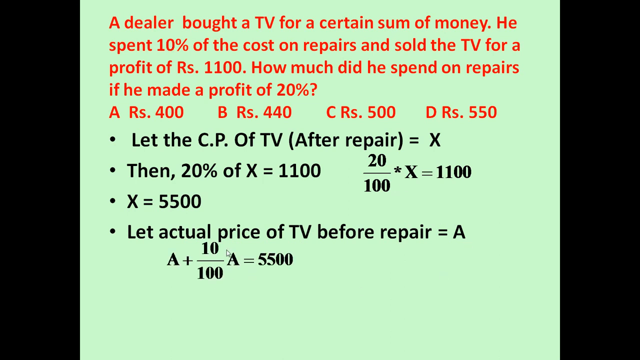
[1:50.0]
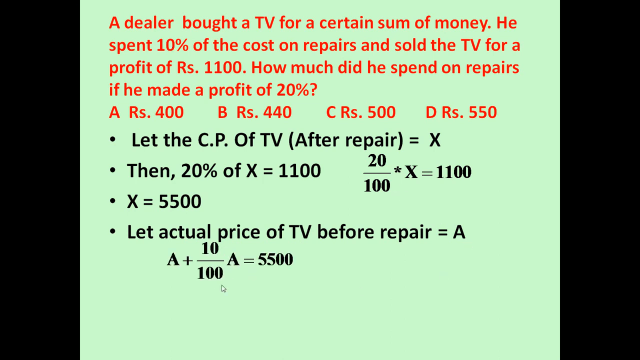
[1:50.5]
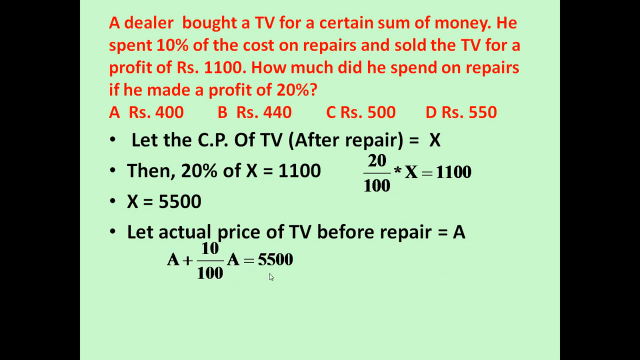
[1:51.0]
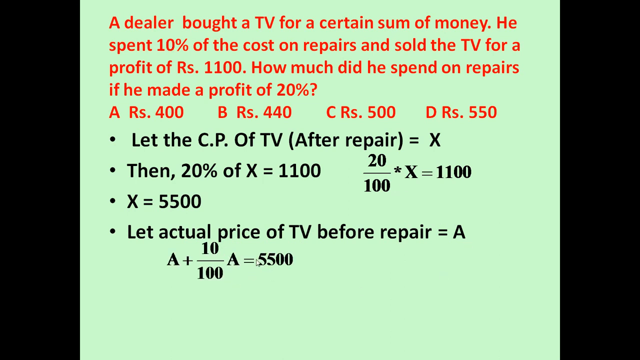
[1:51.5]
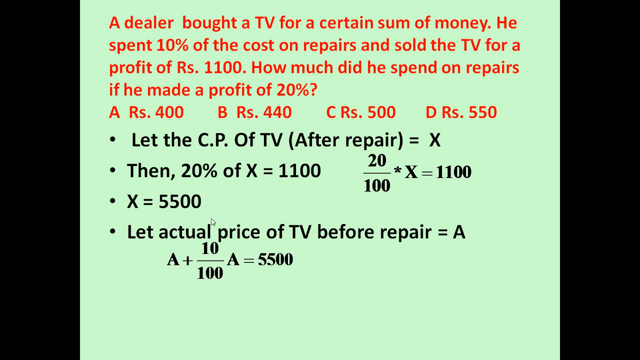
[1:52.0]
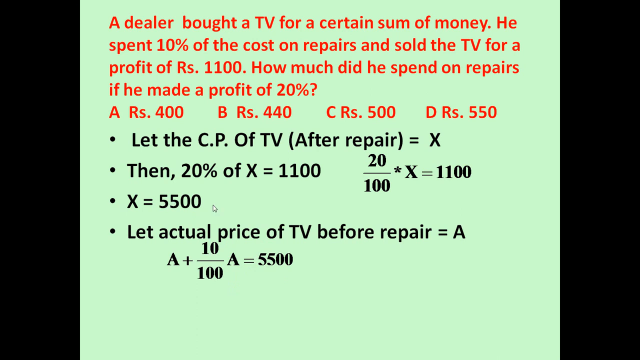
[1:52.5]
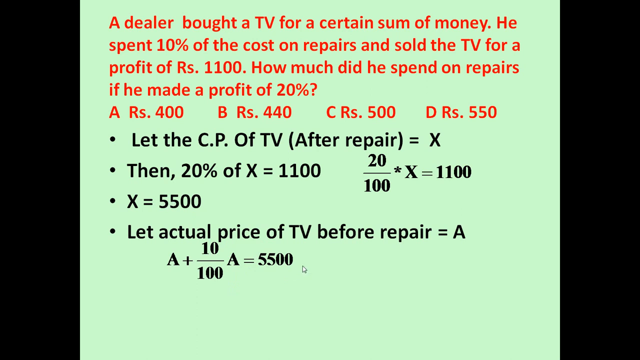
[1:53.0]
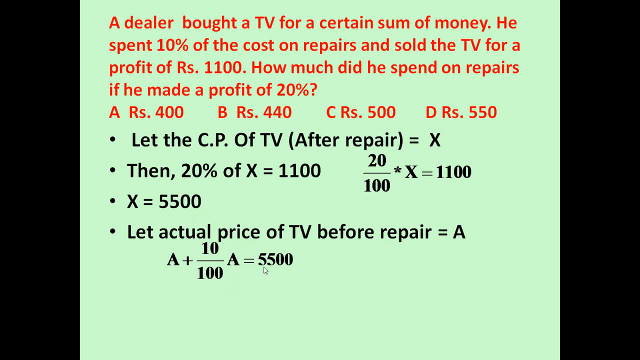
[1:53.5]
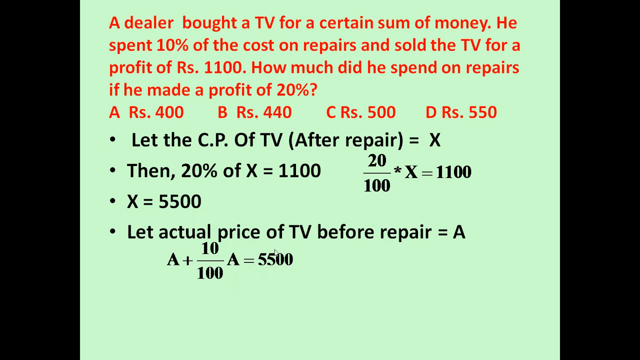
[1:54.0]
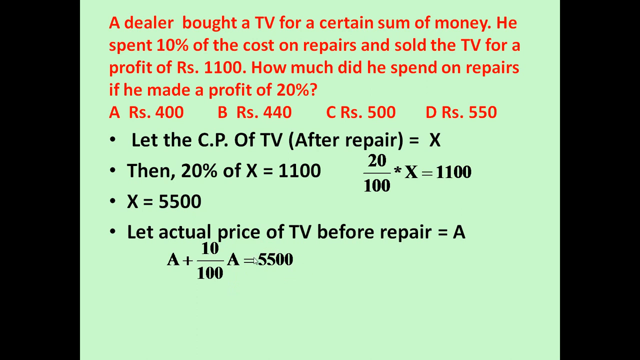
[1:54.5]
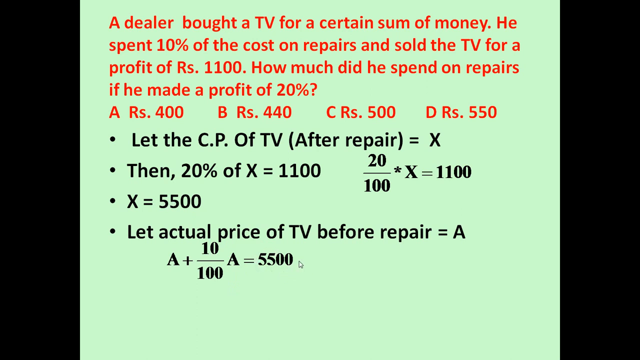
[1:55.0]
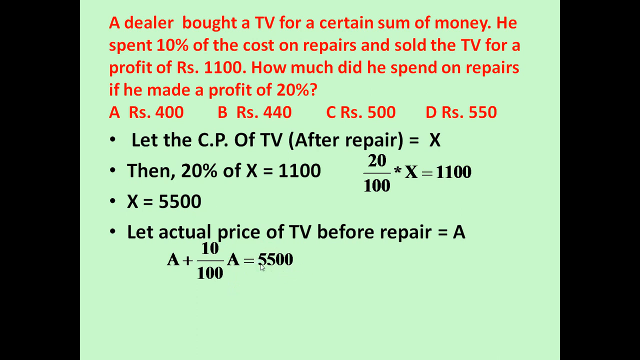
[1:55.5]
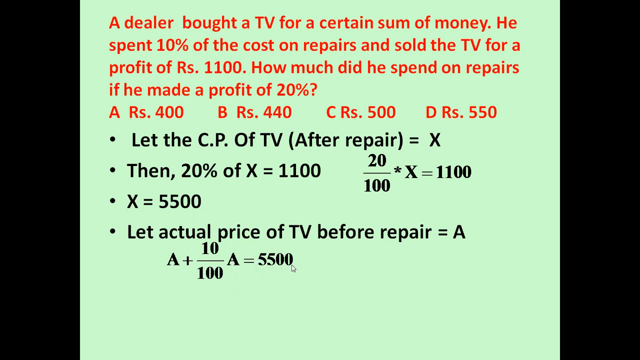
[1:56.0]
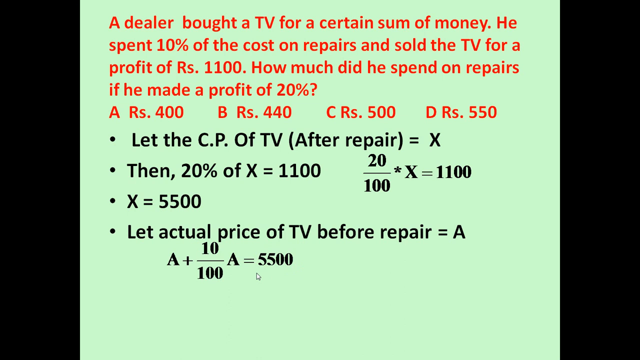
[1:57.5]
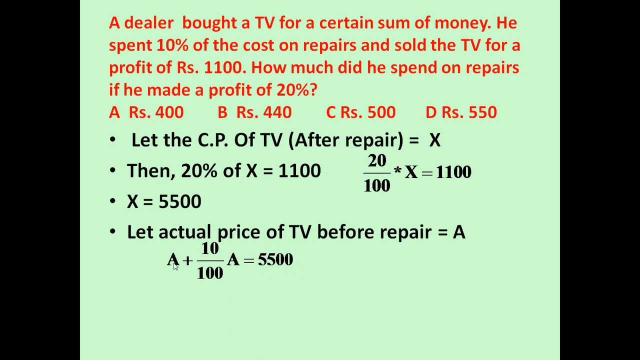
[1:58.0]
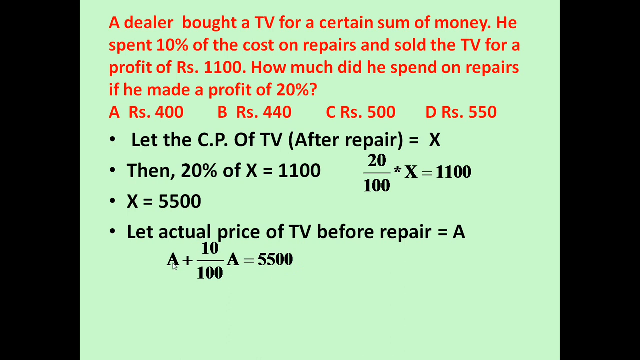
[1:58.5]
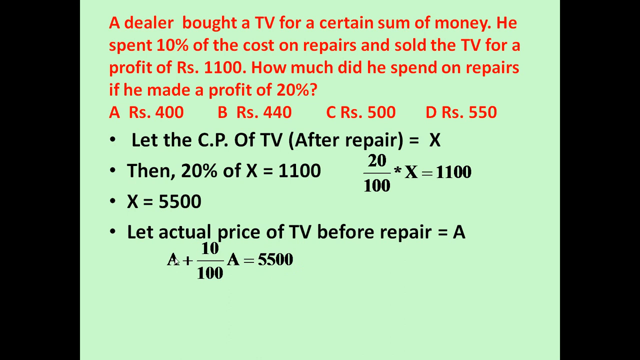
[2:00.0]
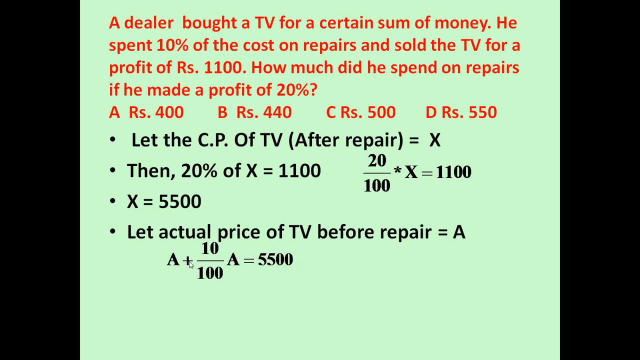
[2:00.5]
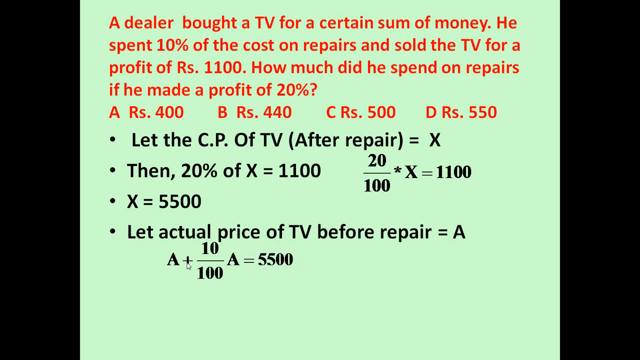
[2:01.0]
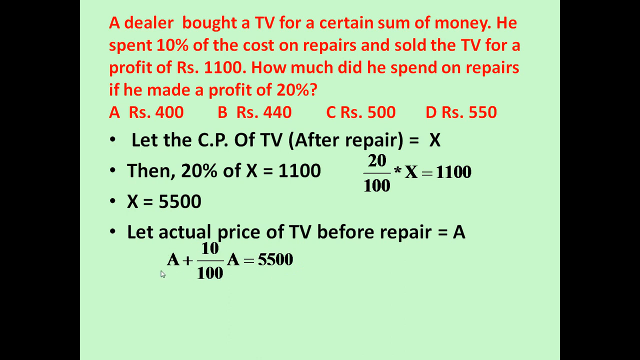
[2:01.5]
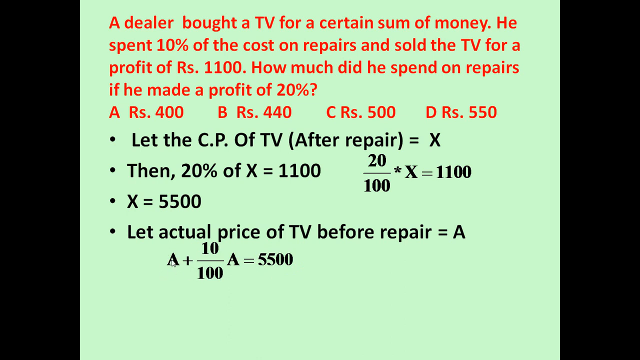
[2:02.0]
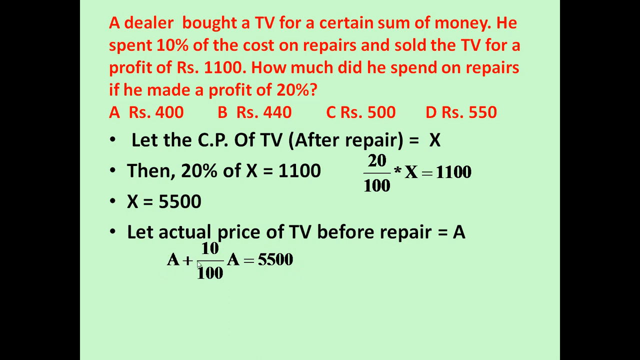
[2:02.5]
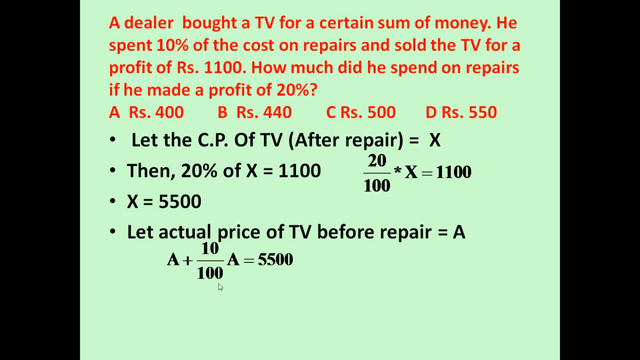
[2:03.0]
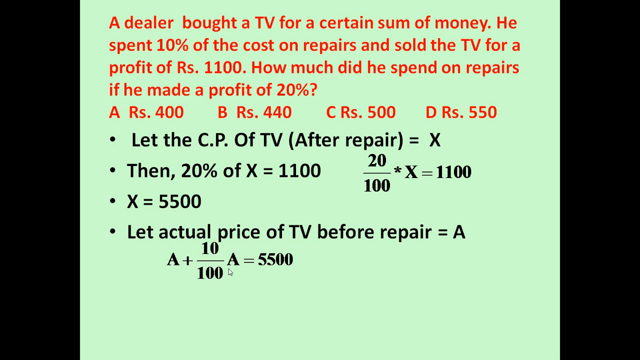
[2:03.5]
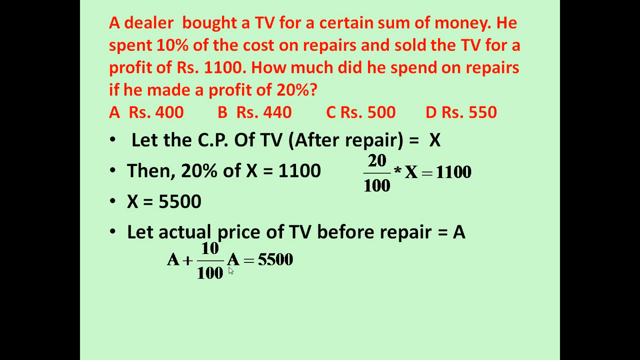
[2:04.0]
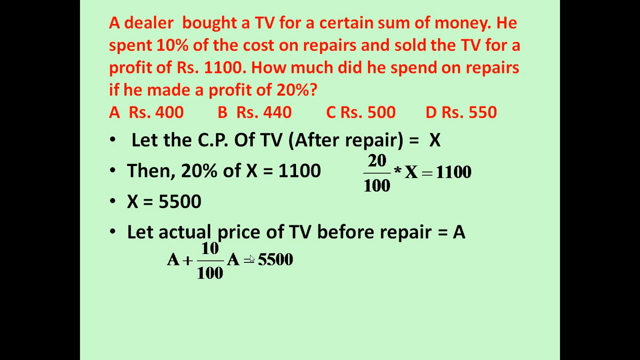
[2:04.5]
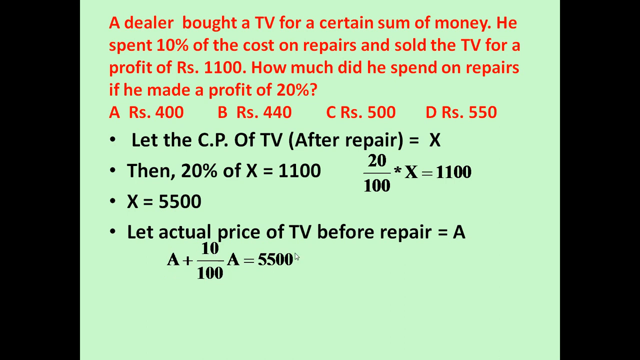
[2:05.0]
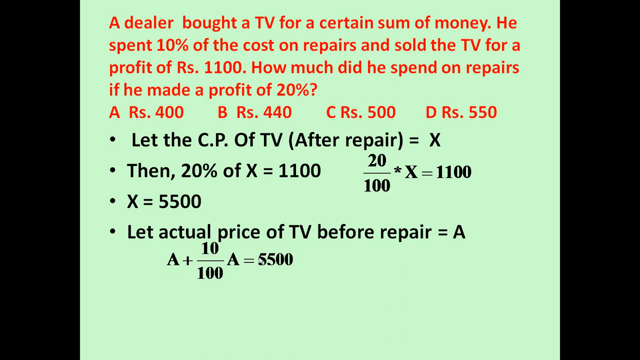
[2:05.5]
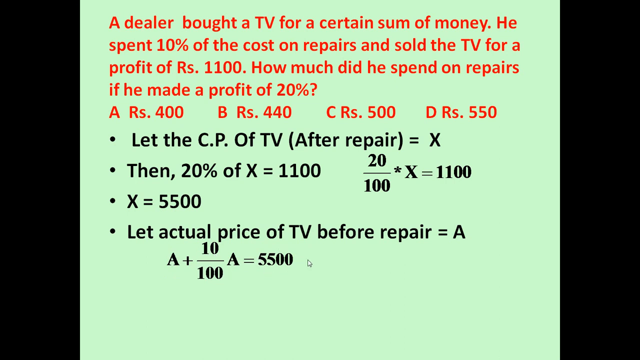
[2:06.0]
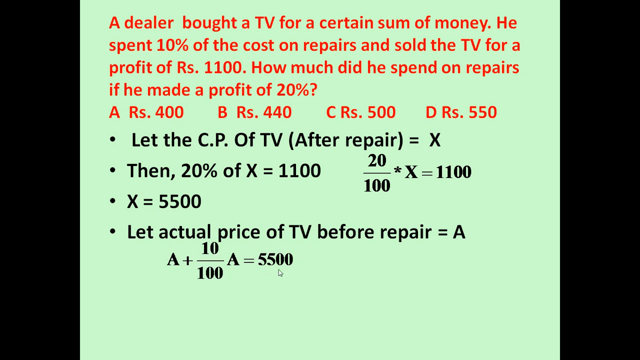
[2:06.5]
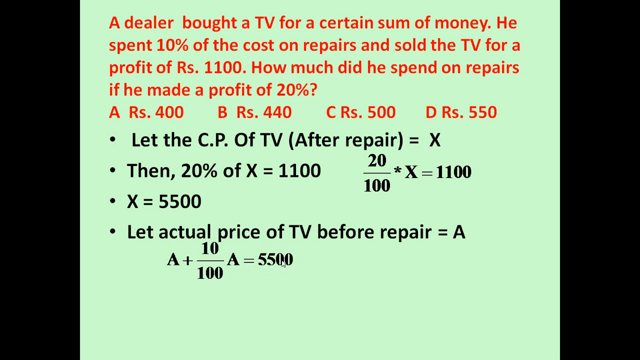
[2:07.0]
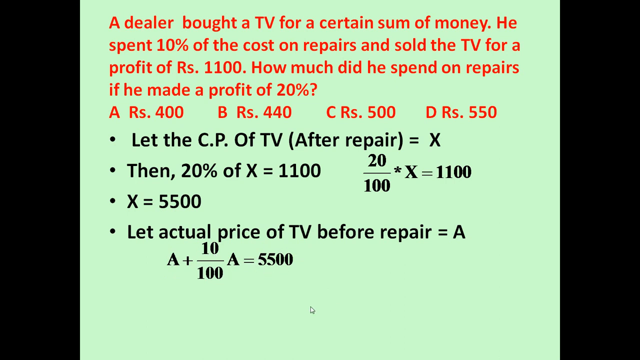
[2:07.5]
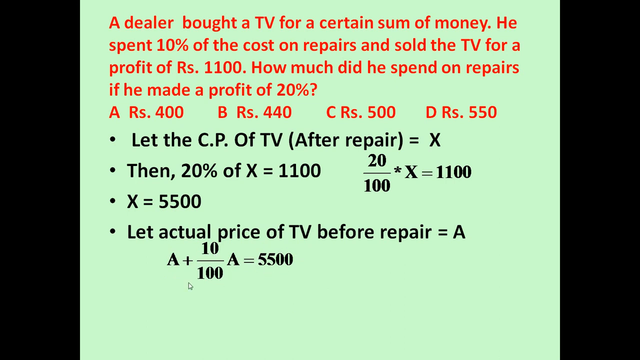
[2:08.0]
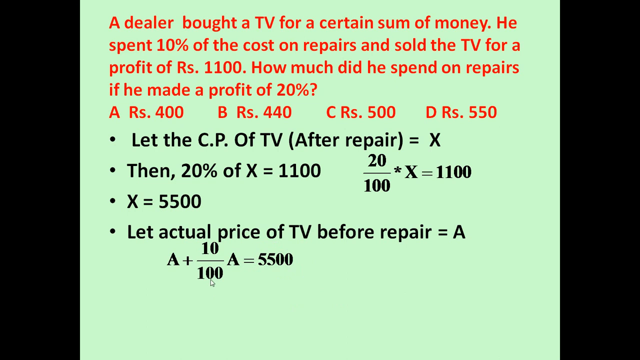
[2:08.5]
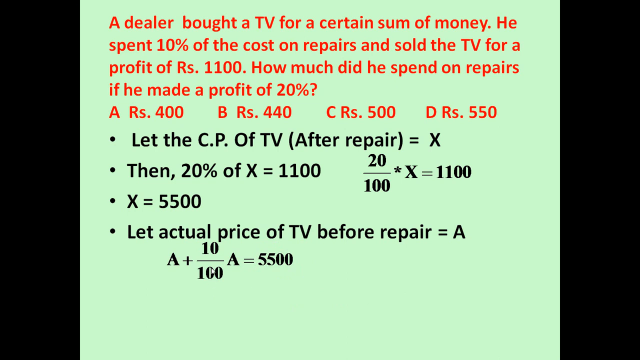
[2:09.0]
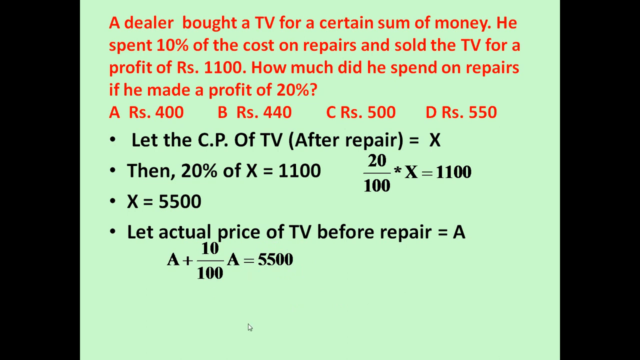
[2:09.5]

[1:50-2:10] A picture shows an Indian man with short hair, a smile on his face, and his left hand on his chin. Around the picture is the name A.K. Agarwal, and text says "this is the A.K. Agarwal aptitude series about profit and loss", with a red border around it. Next comes a math question with four possible answers, written in red. The question reads: "A dealer bought a TV for a certain amount of money. He spent 10% of the cost on repairs and sold the TV for a profit of Rs. 1100. How much did he spend on repairs if he made a profit of 20%?" The options are A, 400; B, 440; C, 500; D, 550. The solution is written in black, and the answer is C, Rs. 500.